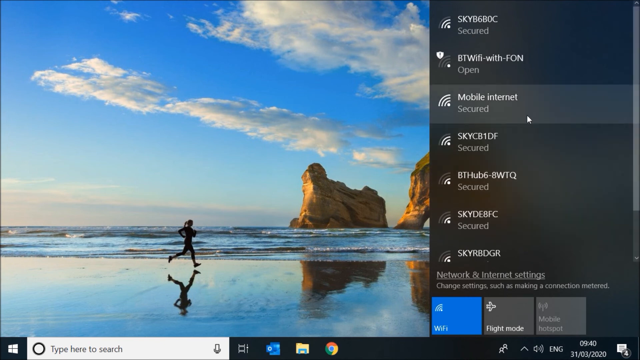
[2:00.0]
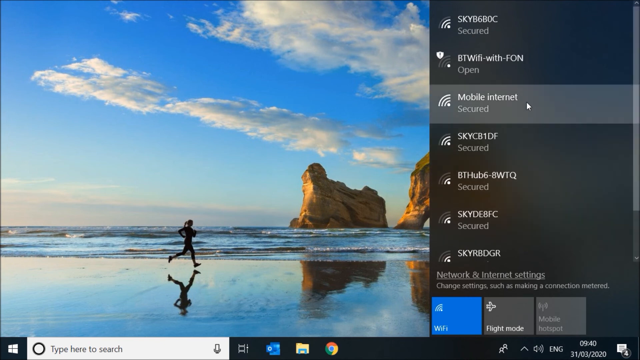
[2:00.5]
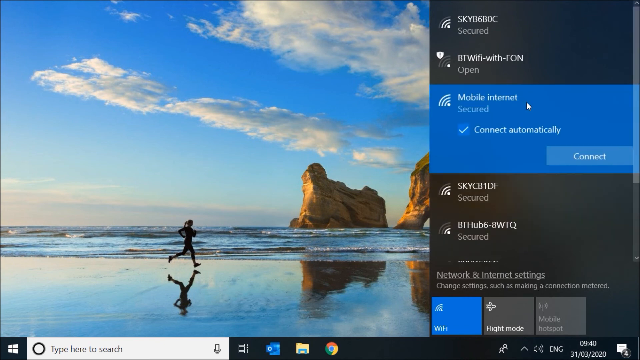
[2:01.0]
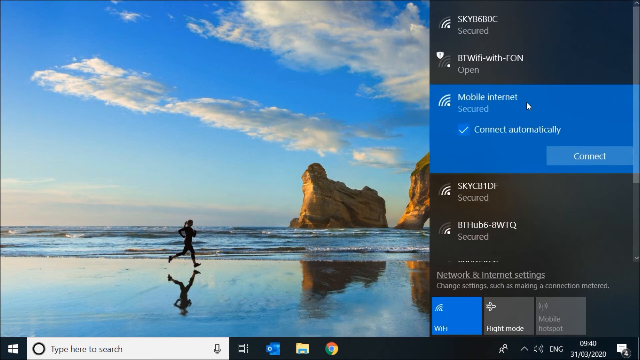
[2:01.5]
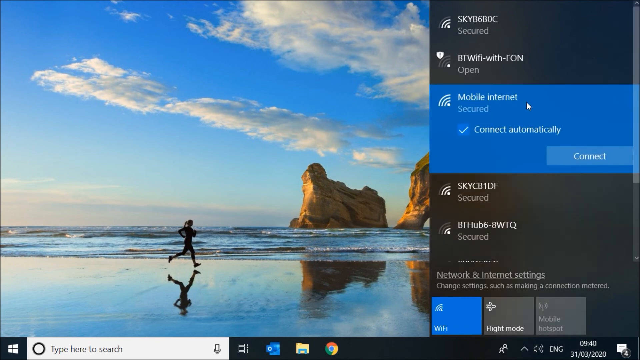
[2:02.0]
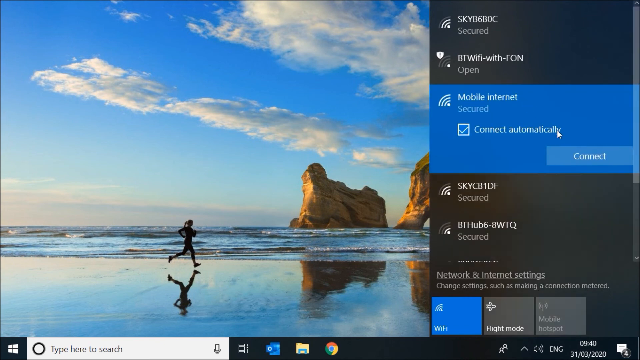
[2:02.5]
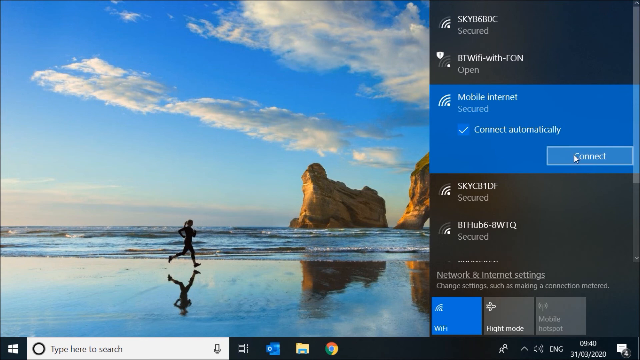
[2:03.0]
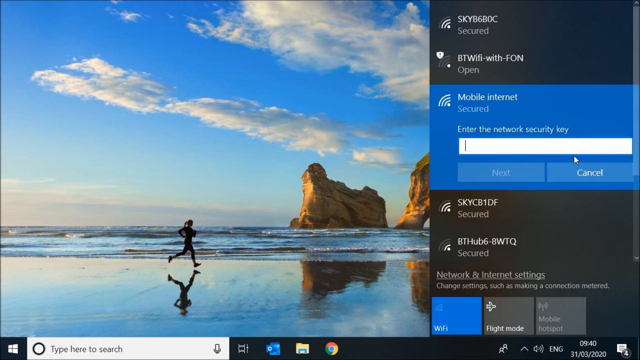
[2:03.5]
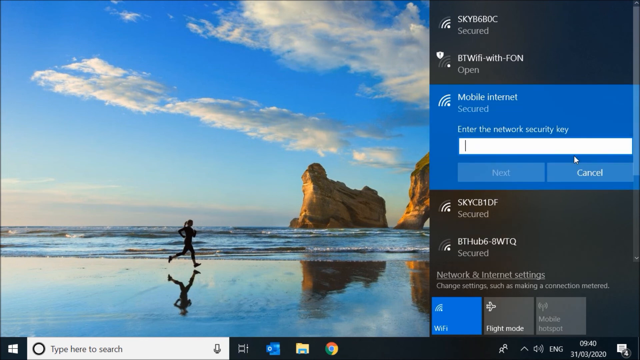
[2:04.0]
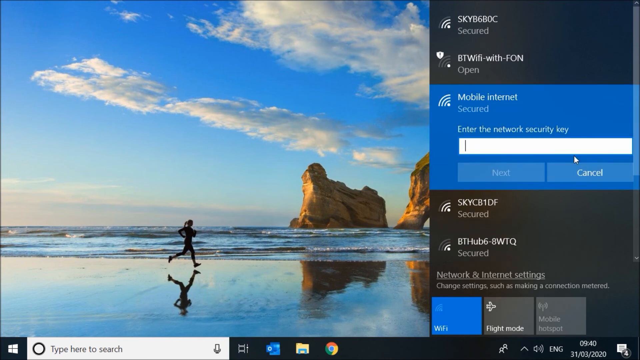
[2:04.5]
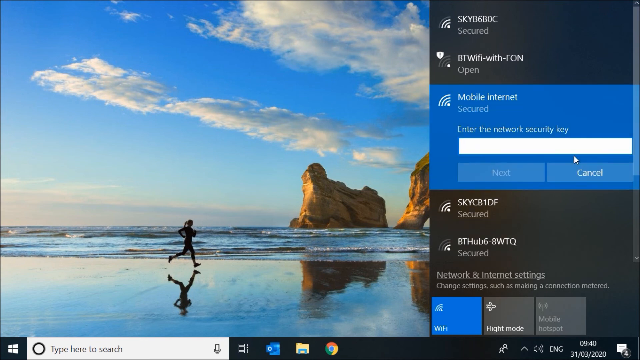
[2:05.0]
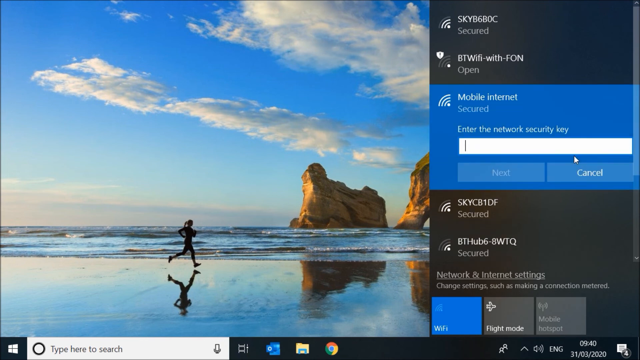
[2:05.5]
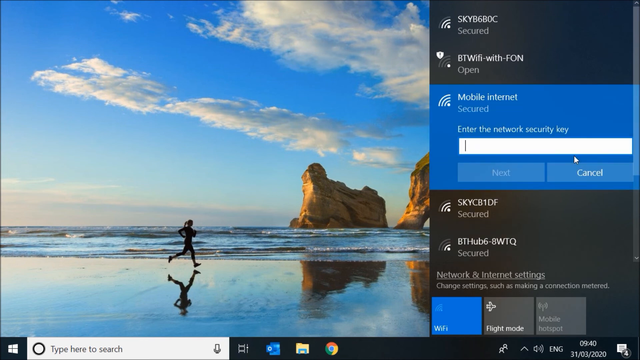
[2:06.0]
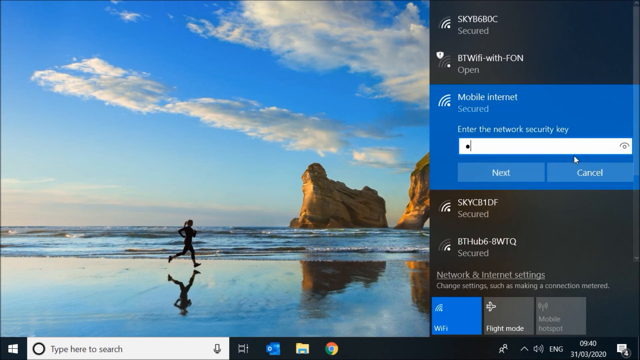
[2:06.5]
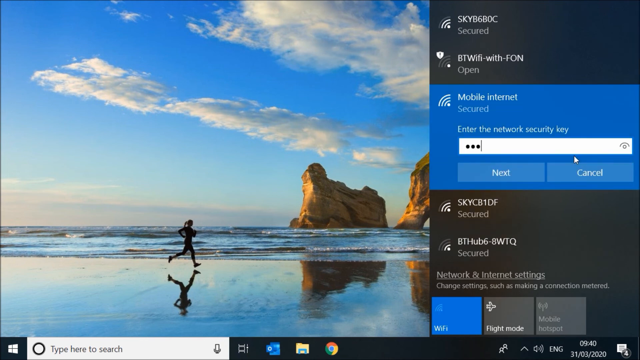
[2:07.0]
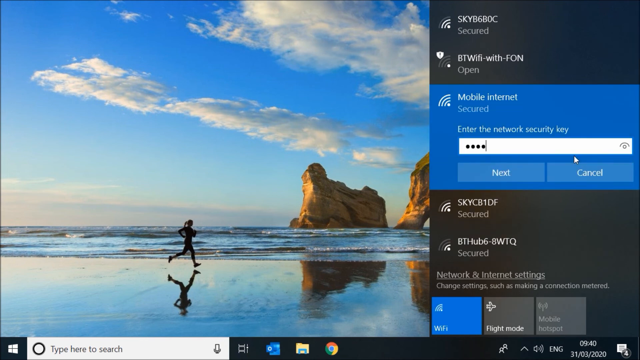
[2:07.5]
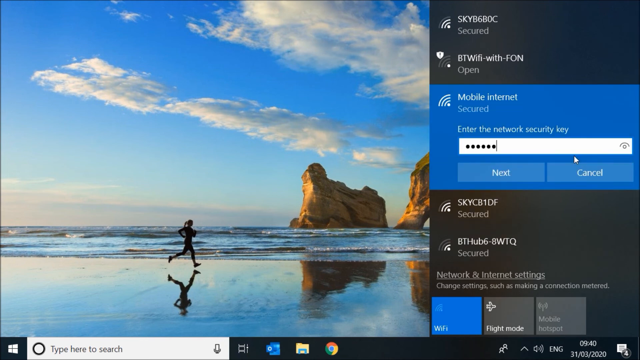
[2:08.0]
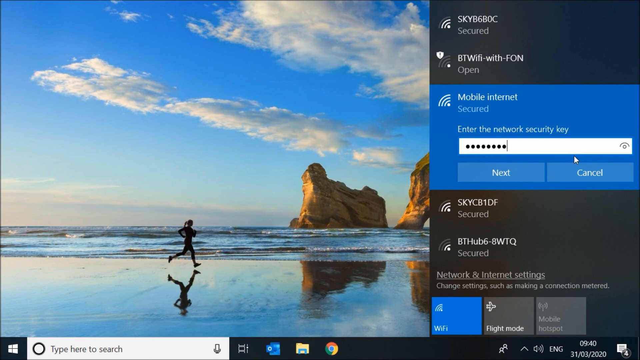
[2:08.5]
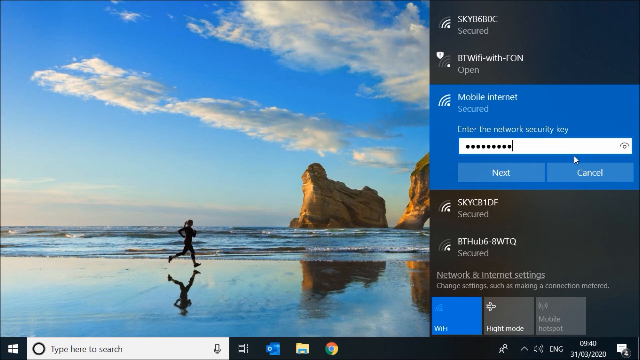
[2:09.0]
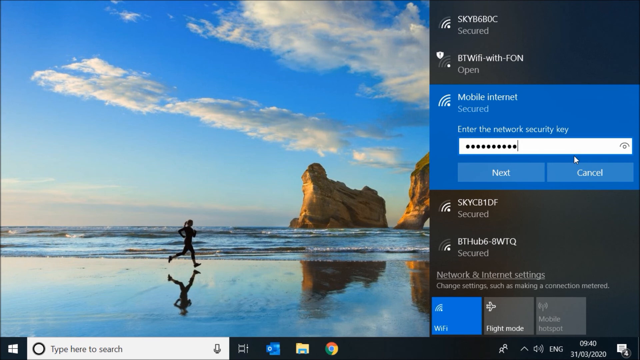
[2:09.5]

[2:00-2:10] A menu appears on the right side of the screen, with the wallpaper visible on the left. In the menu, "mobile internet" appears to be selected and is highlighted in blue, with a check mark next to text reading "connect automatically" and a button below reading "connect". The cursor scrolls down to the connect button and clicks it. Another box titled "mobile internet" appears with an input box; above the input box, white text reads "enter the network security key". A cursor is inside the input box, and as they type, bullet points appear. The view then navigates back to the other menu.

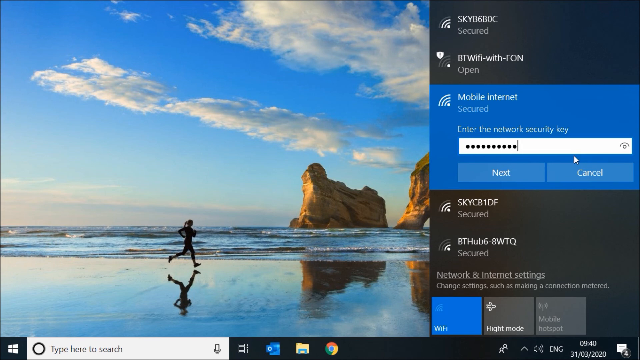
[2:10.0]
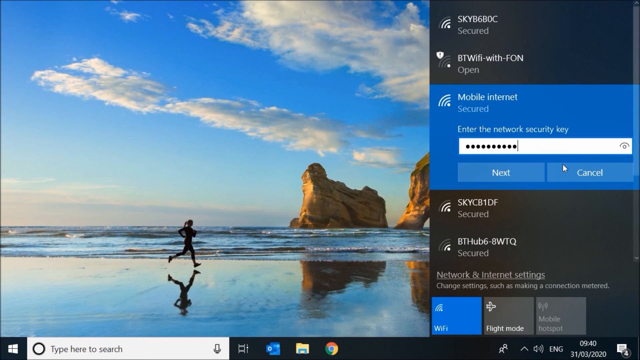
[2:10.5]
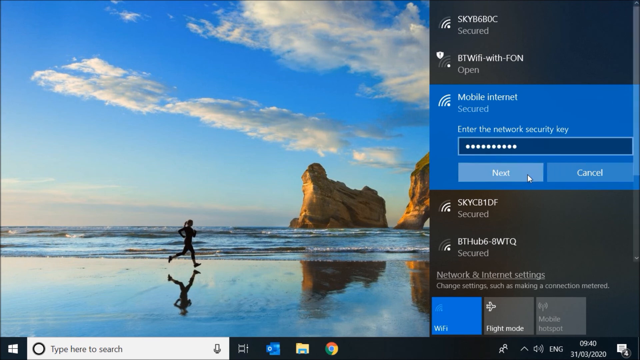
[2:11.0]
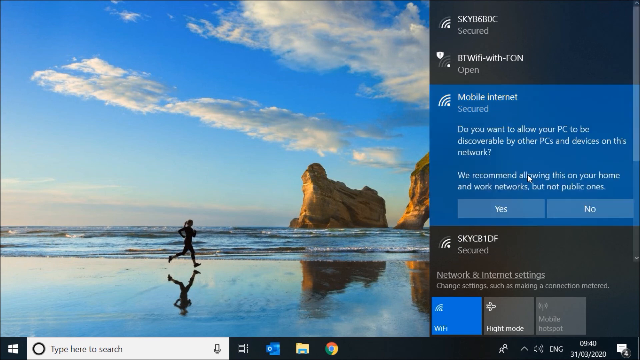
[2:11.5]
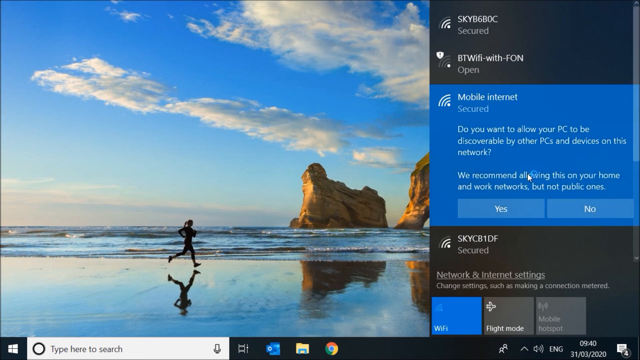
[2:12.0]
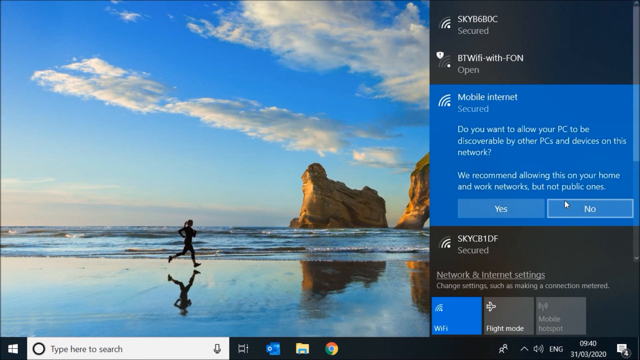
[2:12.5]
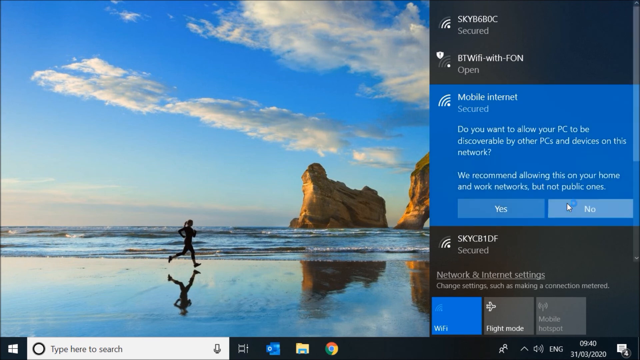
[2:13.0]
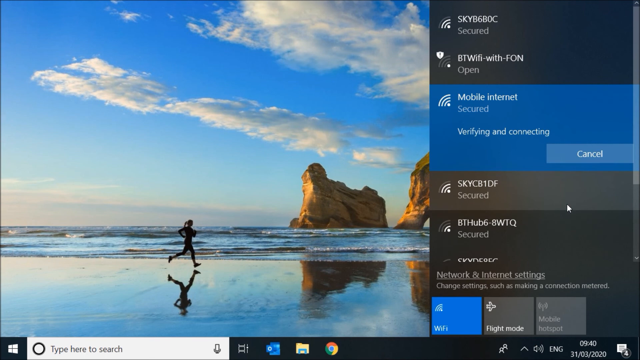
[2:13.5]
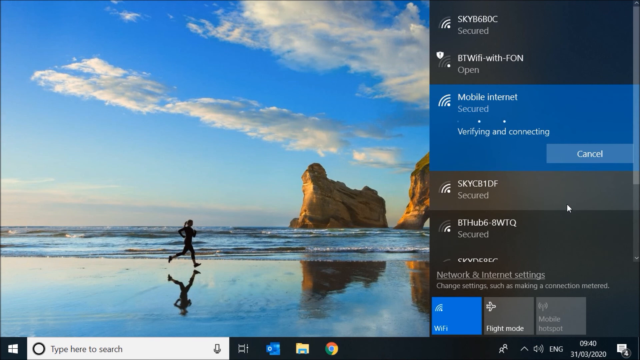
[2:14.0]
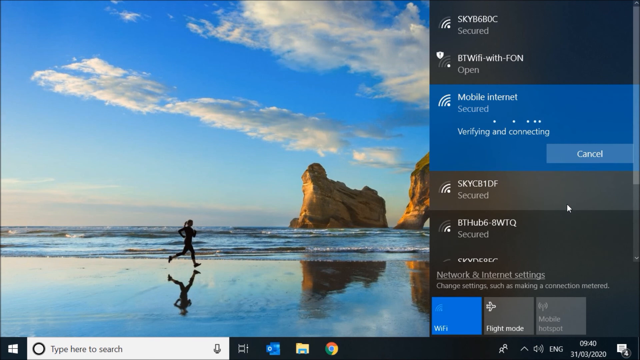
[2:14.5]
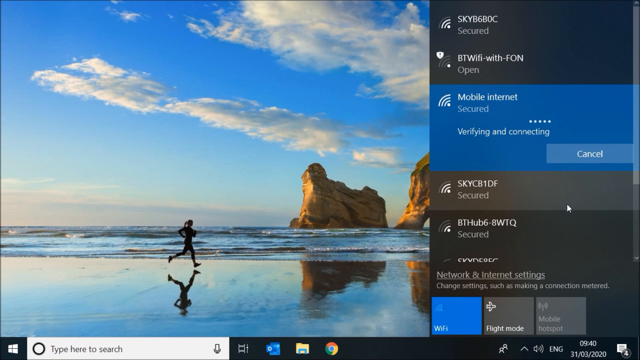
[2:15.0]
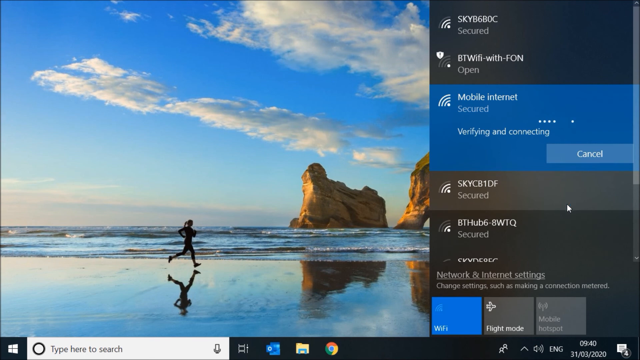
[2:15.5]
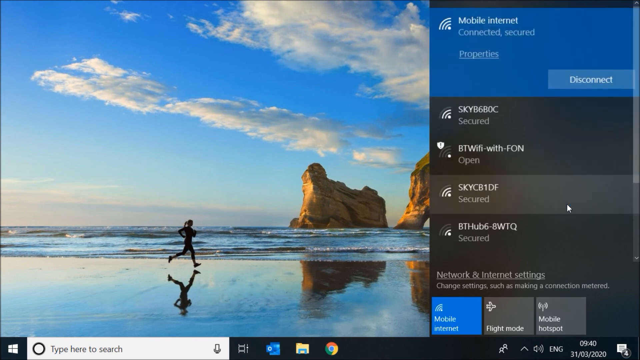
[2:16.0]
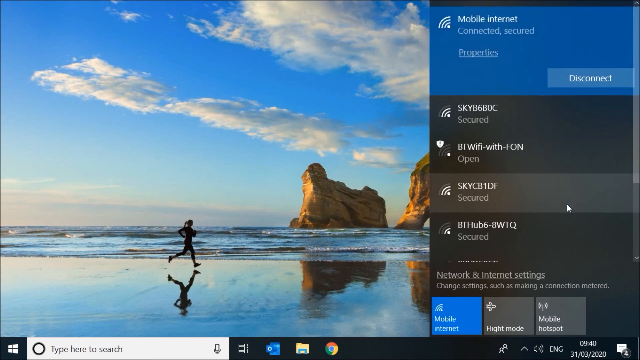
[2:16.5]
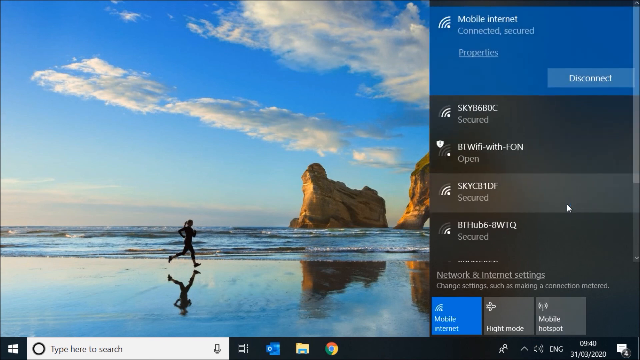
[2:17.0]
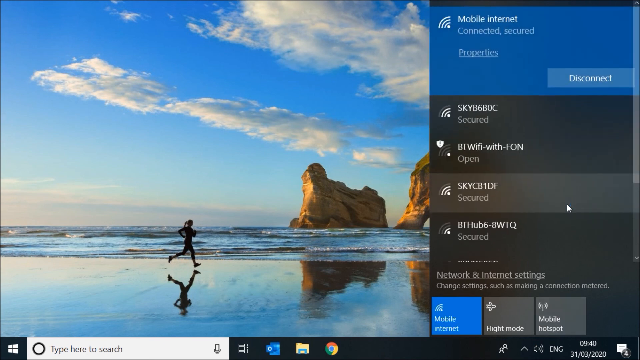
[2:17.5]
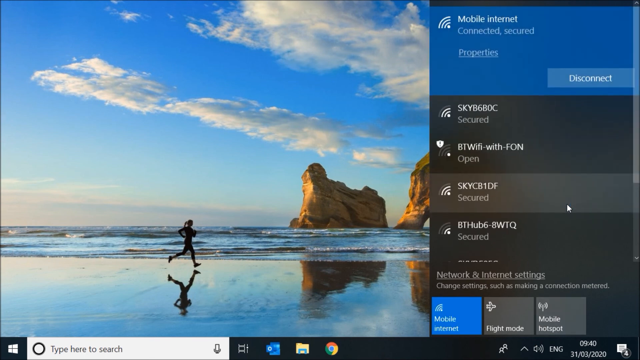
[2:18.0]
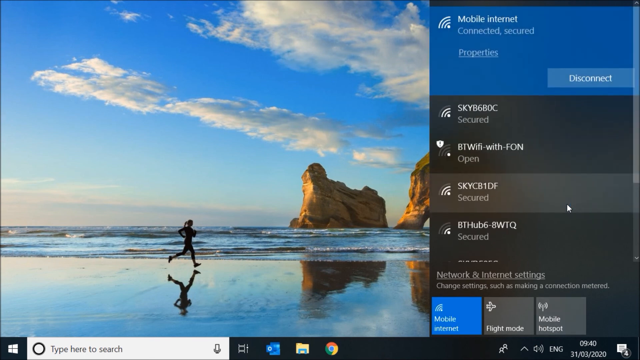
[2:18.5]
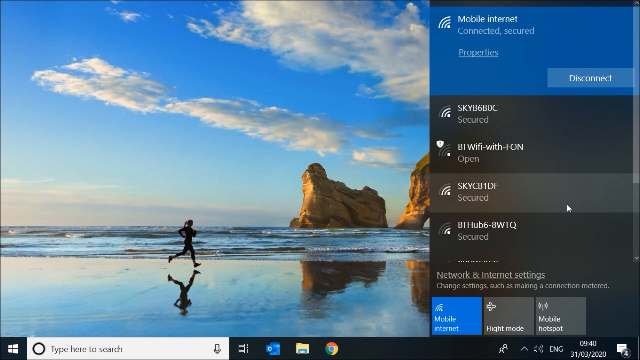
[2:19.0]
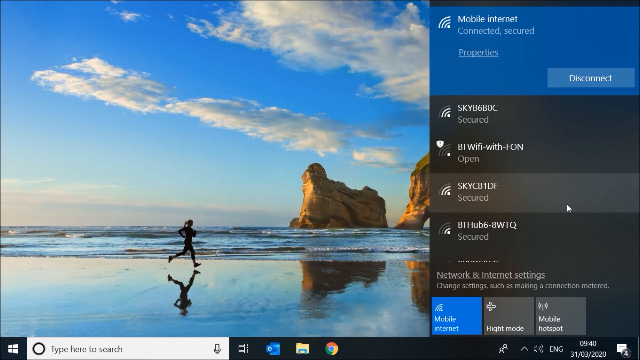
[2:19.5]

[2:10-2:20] Someone seems to be entering a security key in a pop-up window on their cell phone, then clicks the next button in the pop-up window. The view seems to navigate back to a menu with "mobile internet" highlighted in blue. Using the cursor, they move toward a button at the bottom of the blue highlighted area that reads "no" and click it. The view navigates back to the earlier menu, showing the heading "mobile internet" with "secured" underneath.